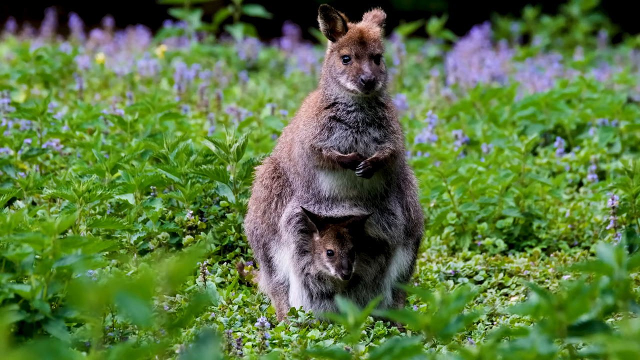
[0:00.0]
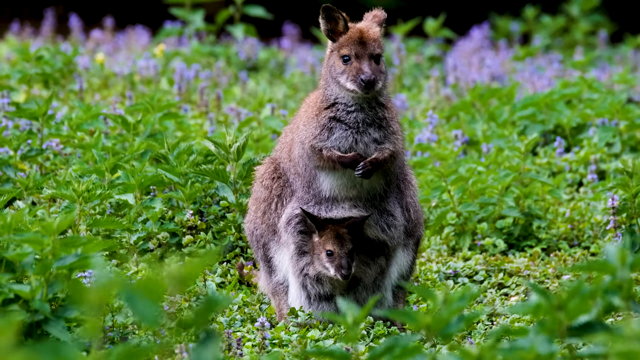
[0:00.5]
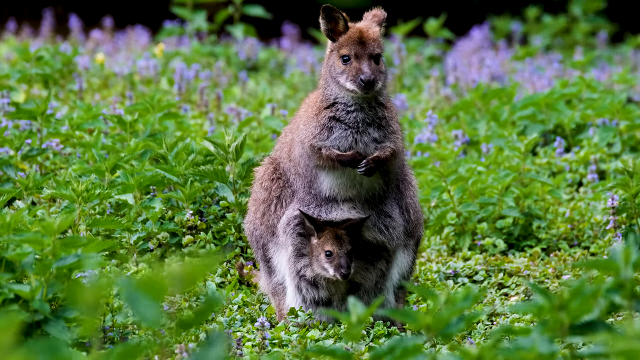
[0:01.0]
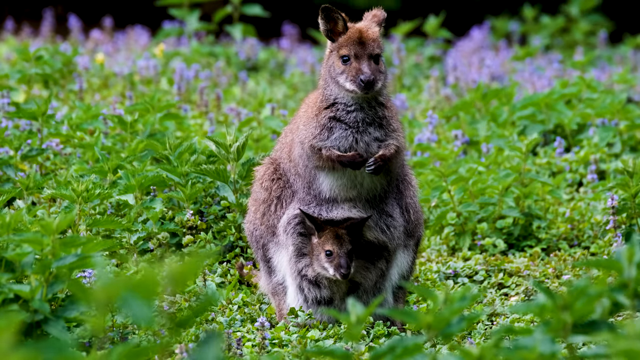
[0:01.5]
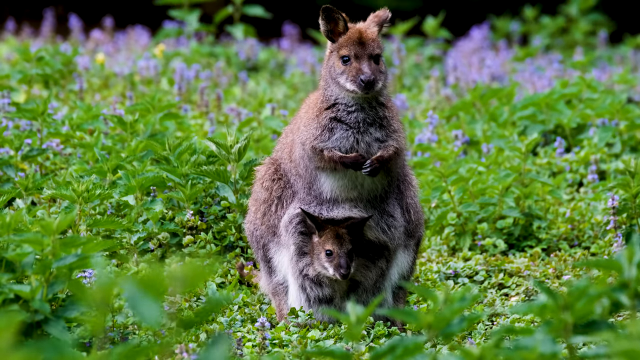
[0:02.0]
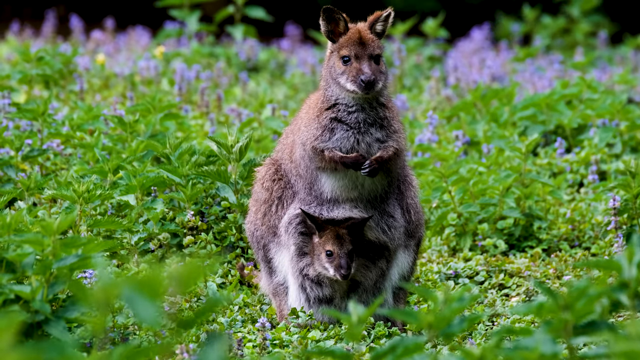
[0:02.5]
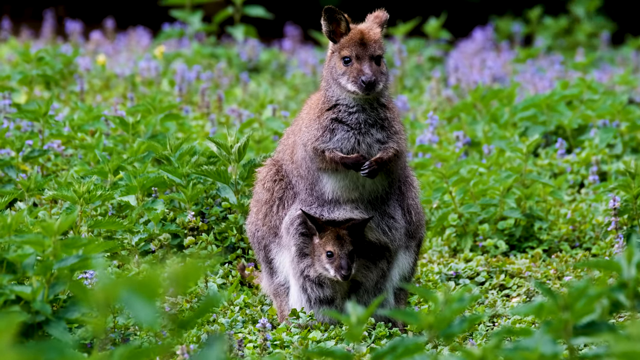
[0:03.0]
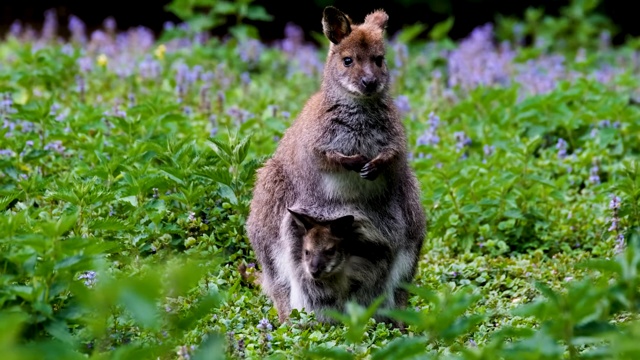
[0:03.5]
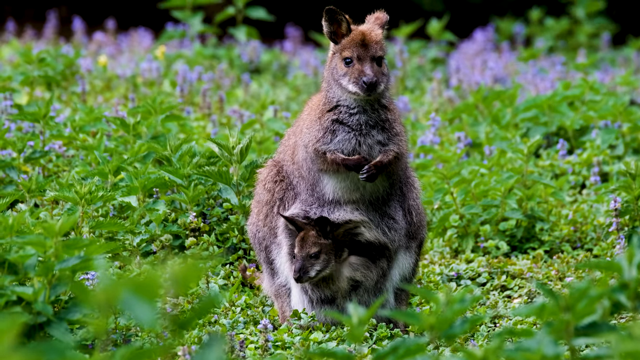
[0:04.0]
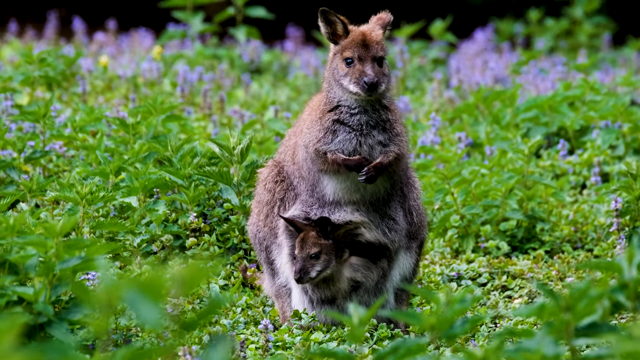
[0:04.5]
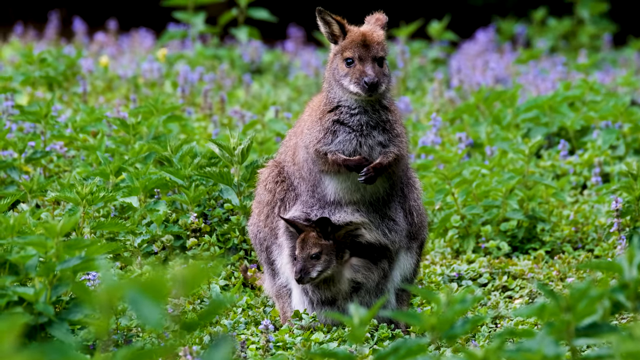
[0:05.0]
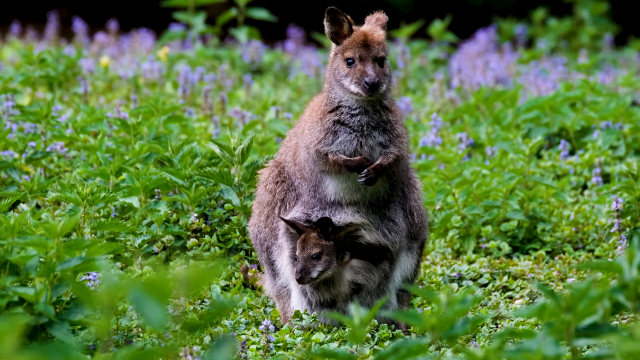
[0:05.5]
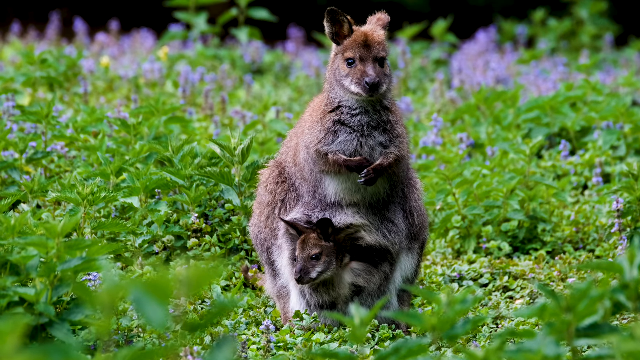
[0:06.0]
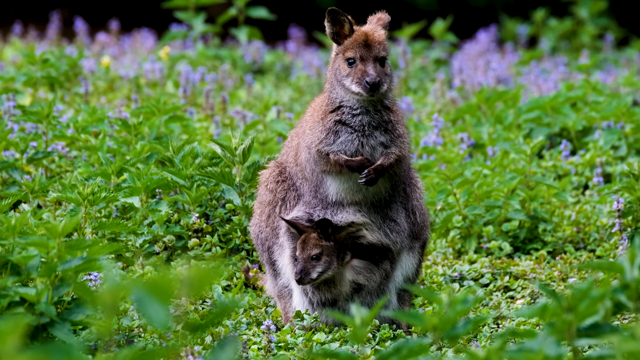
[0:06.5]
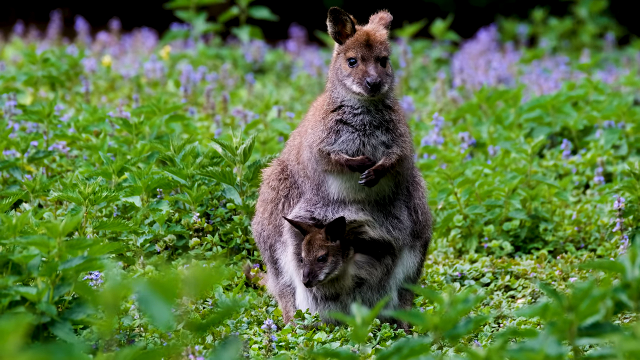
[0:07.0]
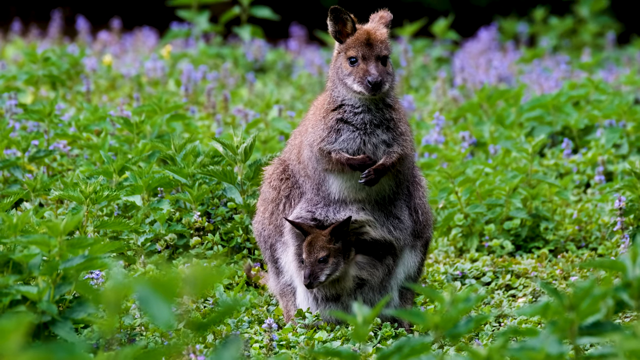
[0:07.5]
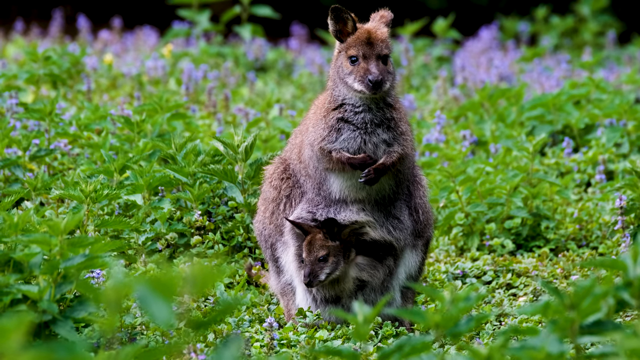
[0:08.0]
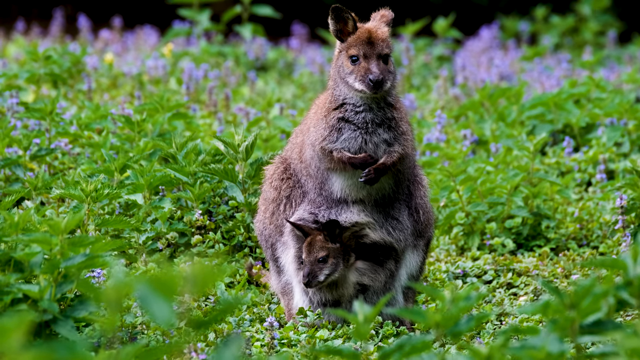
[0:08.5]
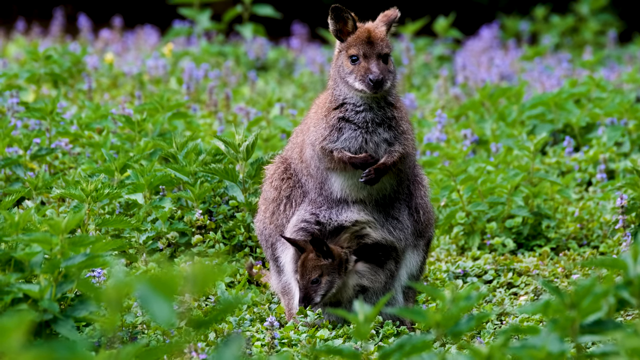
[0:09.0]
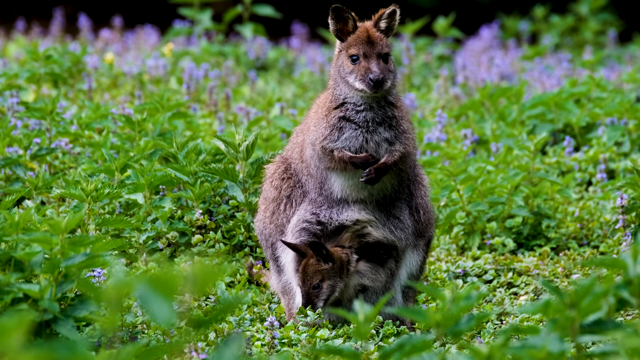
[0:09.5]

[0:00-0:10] In what looks to be a small meadow with purple flowers in the background, an unidentified furry animal is in the foreground. It has the stance of a kangaroo and, like a kangaroo, carries its baby in a pouch in its belly. It is a small brown furry animal with fox-like ears that look like they can twist at a 180-degree angle, dark brown-black eyes, and a little snout somewhat similar to a kangaroo's but slightly flatter. It has fur all over its body and small little hands, and it has an almost pear-like shape as it sits in the field. The baby sits relaxed in the pouch, and there is not much movement other than the mother's ears moving slightly.